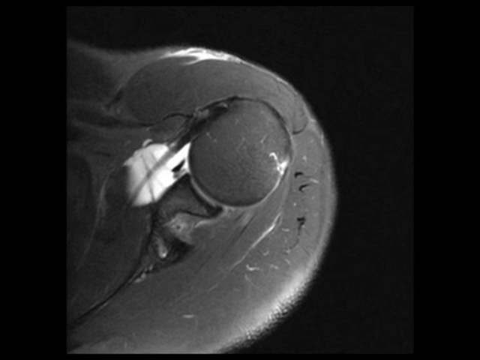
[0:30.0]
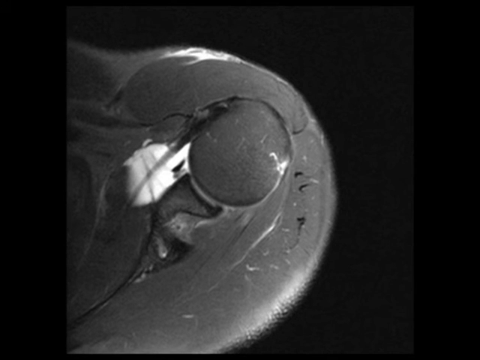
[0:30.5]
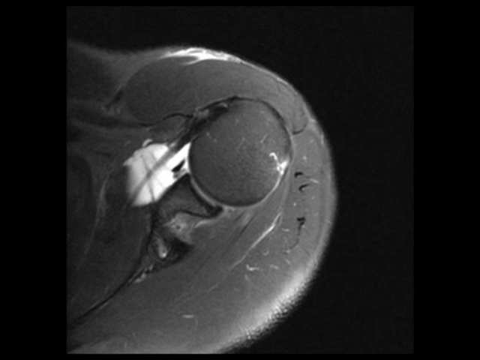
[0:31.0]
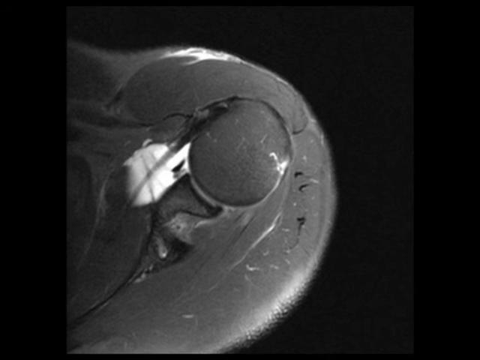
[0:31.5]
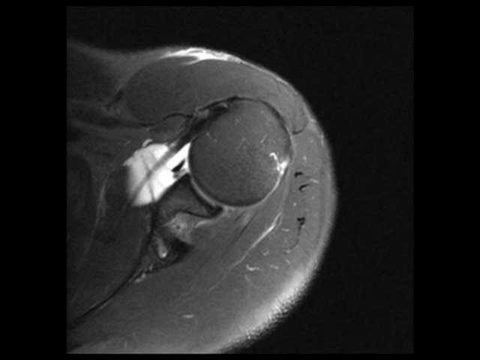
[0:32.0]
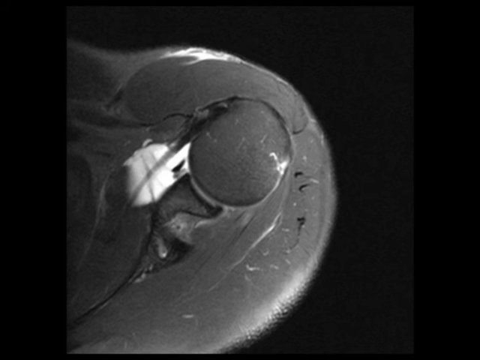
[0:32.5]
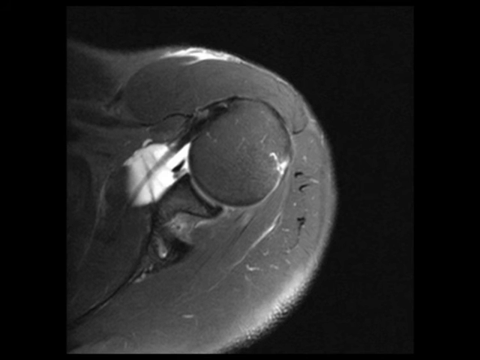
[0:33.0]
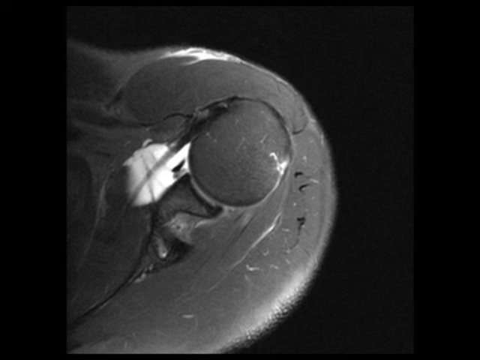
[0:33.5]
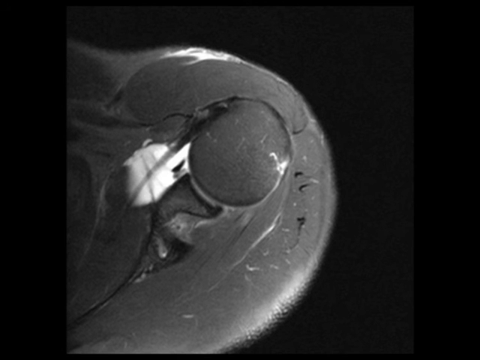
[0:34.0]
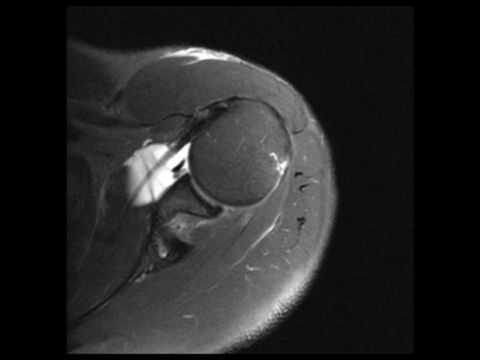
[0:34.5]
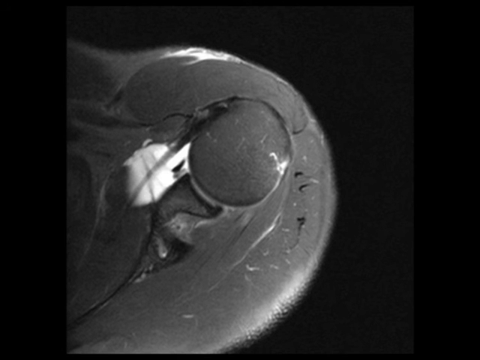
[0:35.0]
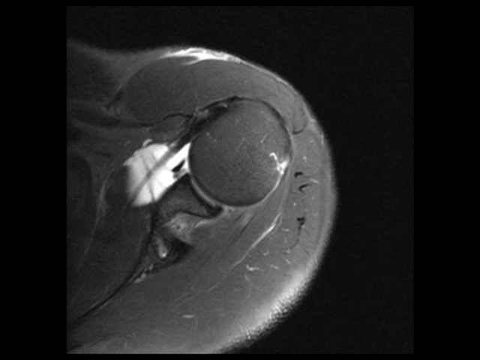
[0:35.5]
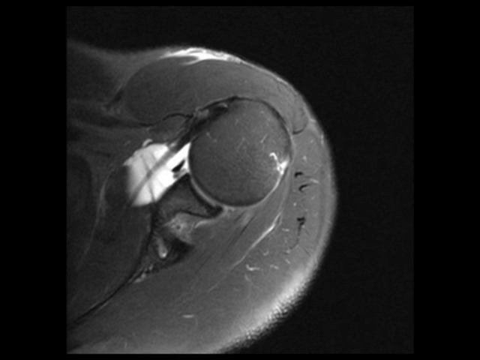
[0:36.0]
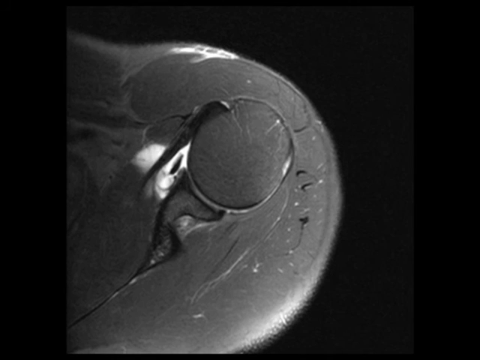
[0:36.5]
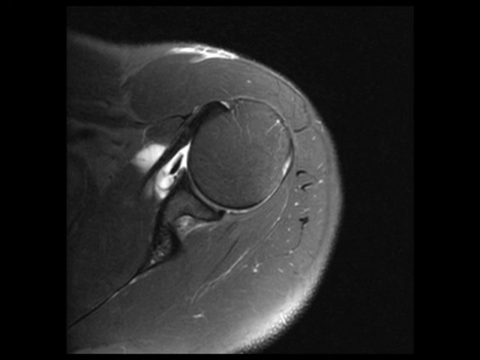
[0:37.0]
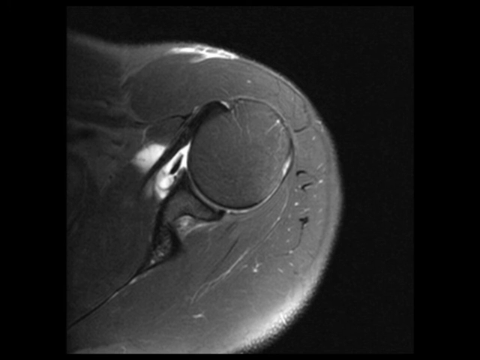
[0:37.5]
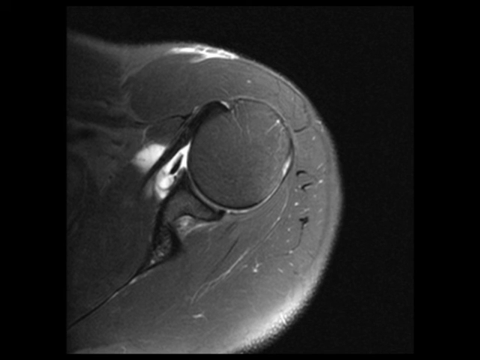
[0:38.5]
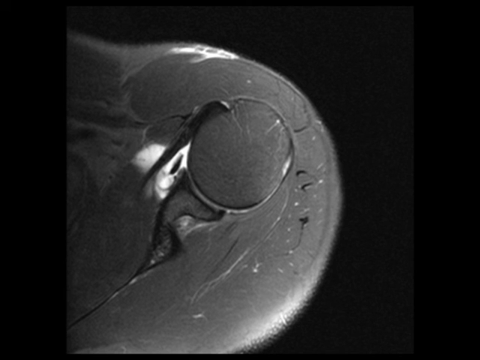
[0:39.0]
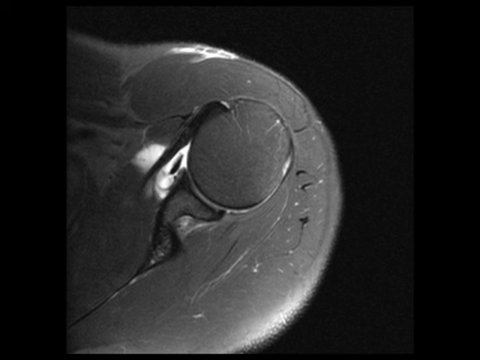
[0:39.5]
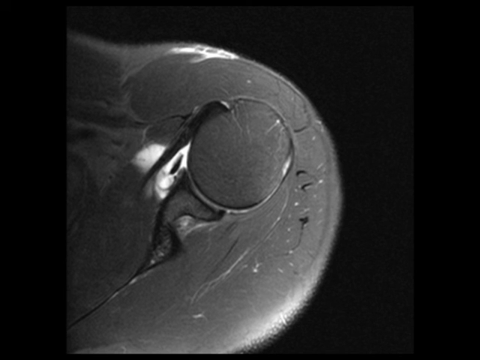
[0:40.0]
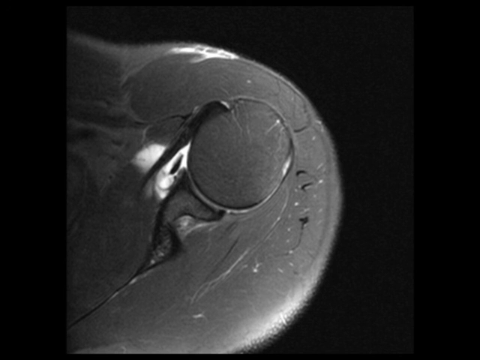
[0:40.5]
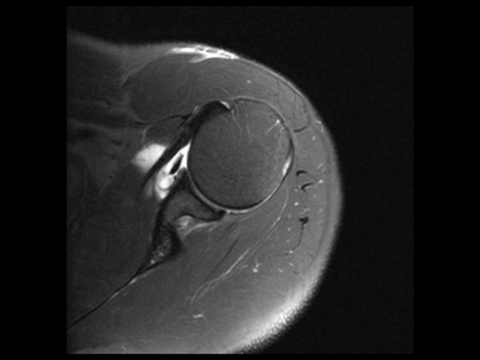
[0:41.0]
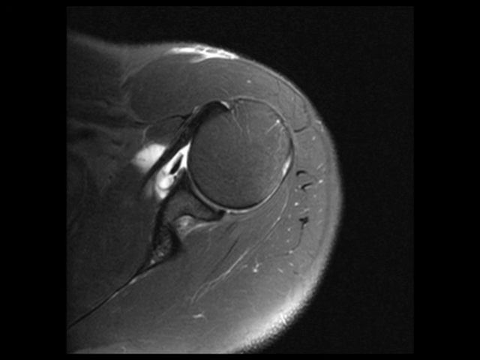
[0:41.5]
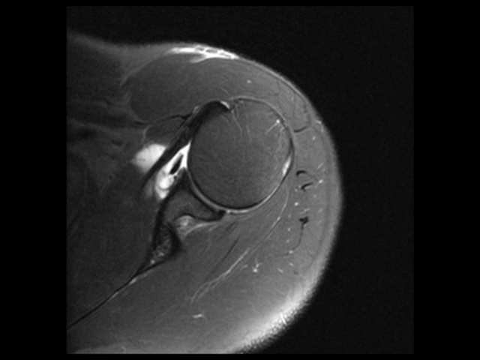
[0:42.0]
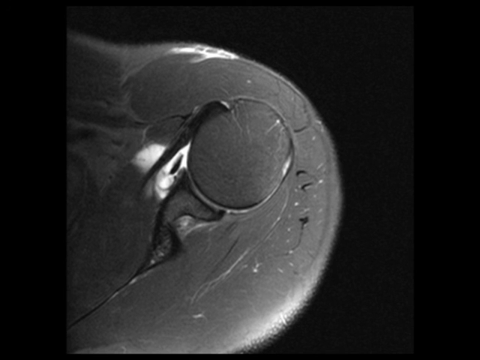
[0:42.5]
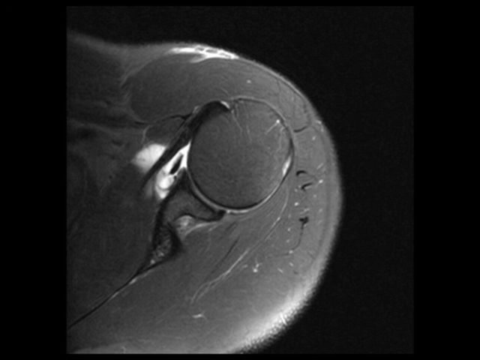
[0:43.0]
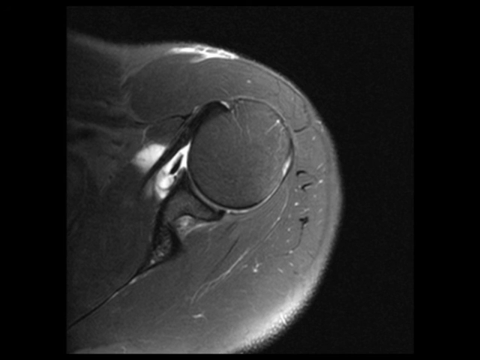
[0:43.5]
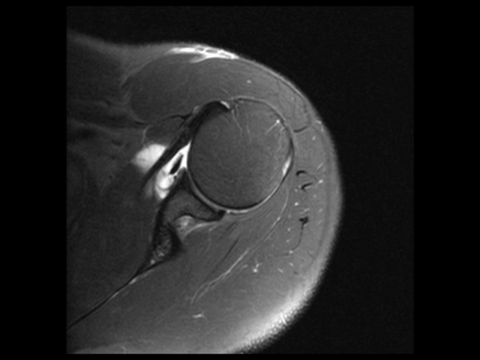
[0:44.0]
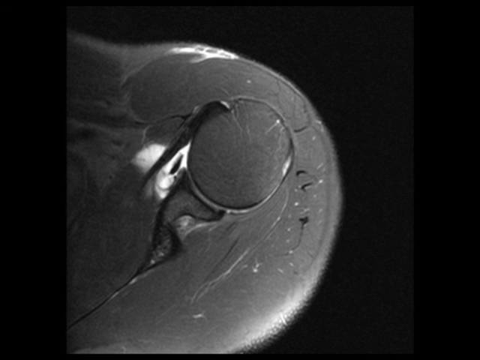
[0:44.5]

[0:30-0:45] The background is still black, and the object can apparently be seen a little more clearly, though it still cannot be identified. It almost looks slimy, like frog skin that always appears wet. The image appears more of a silver metallic gray. There is clearly a circle with a black outline, with an area of white at the bottom of the circle, and a crevice; all of these are outlined in black, which makes them stand out. There is a little area of white at the top of the circle, areas of white along the membrane, and little patches of white kind of all throughout the image.